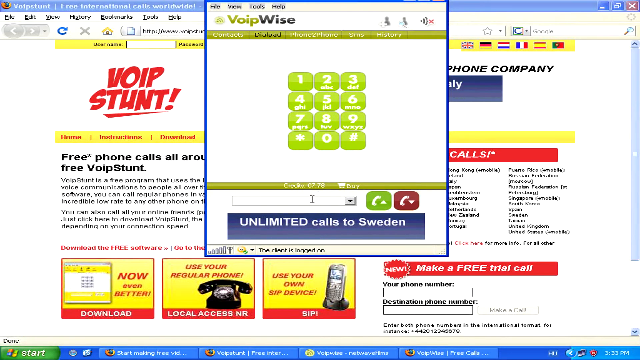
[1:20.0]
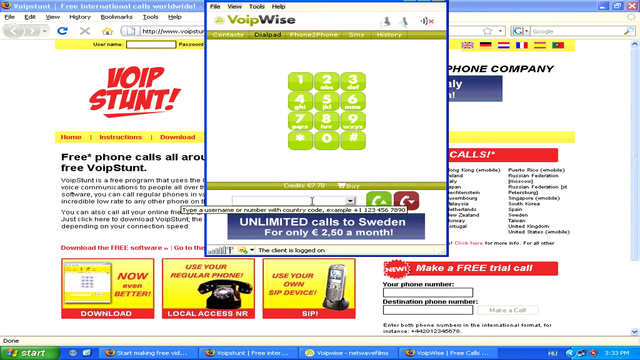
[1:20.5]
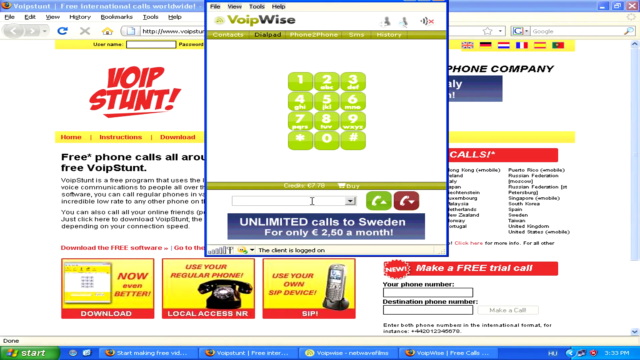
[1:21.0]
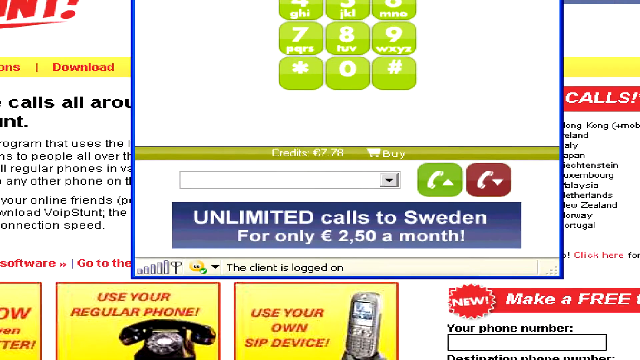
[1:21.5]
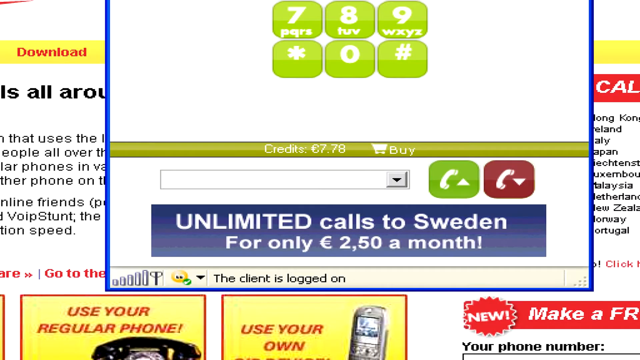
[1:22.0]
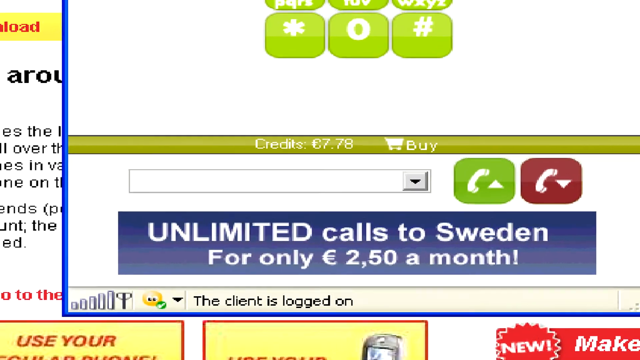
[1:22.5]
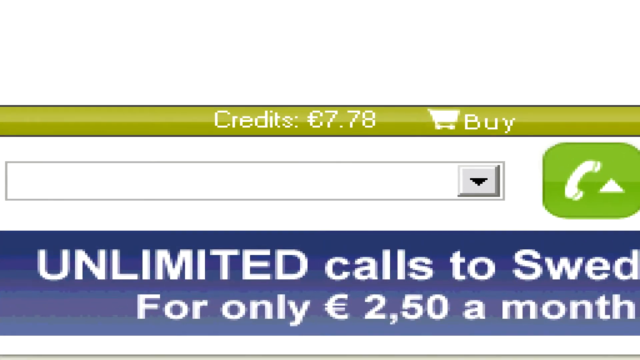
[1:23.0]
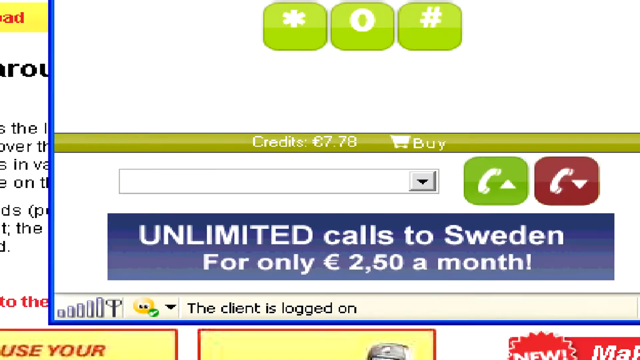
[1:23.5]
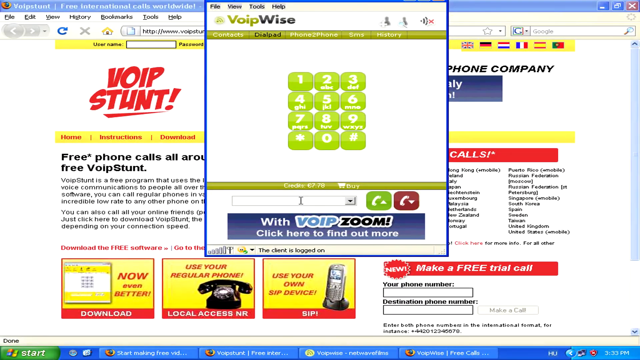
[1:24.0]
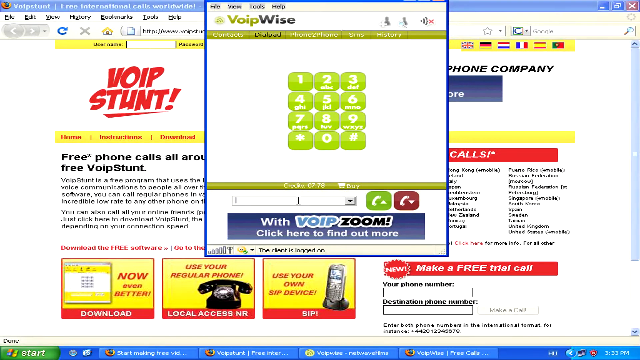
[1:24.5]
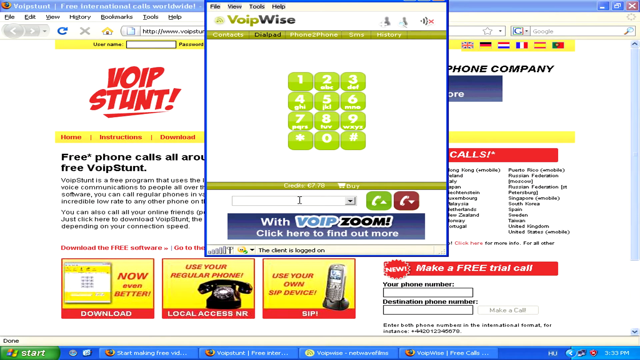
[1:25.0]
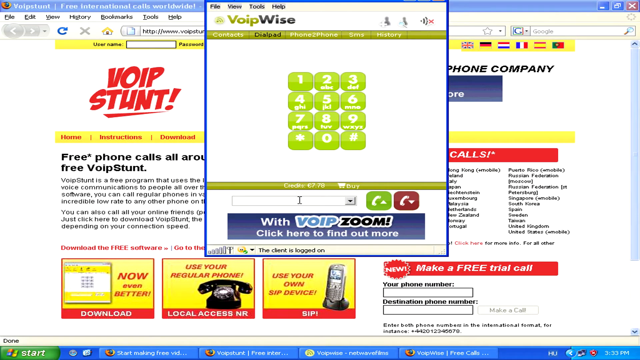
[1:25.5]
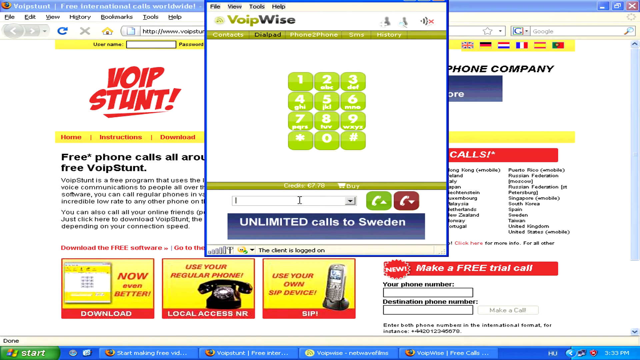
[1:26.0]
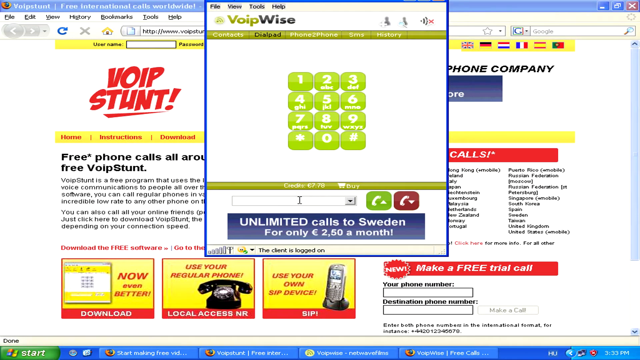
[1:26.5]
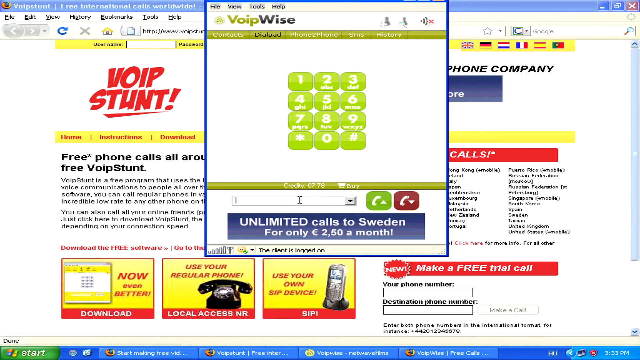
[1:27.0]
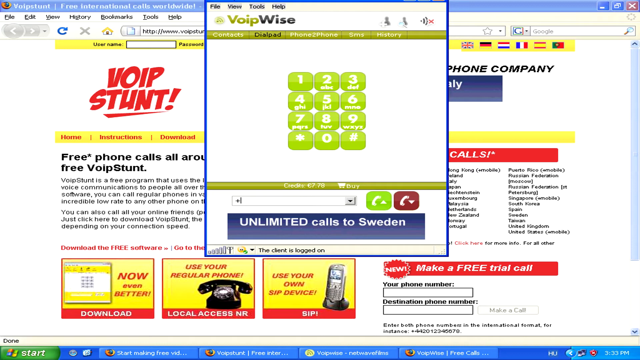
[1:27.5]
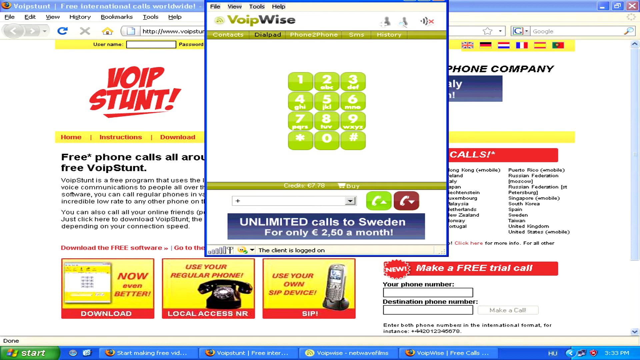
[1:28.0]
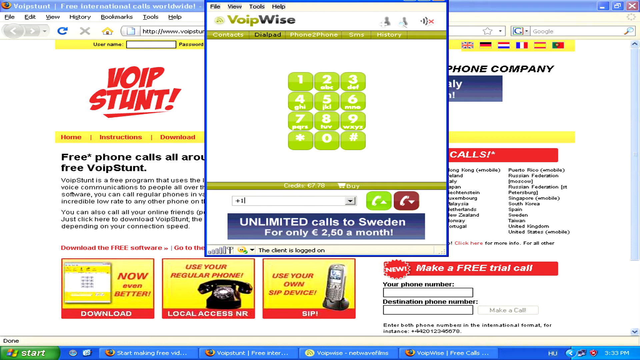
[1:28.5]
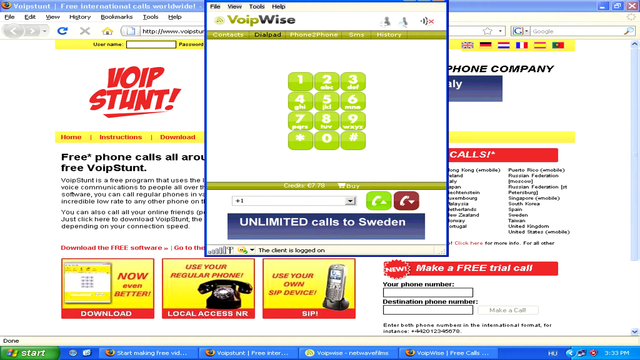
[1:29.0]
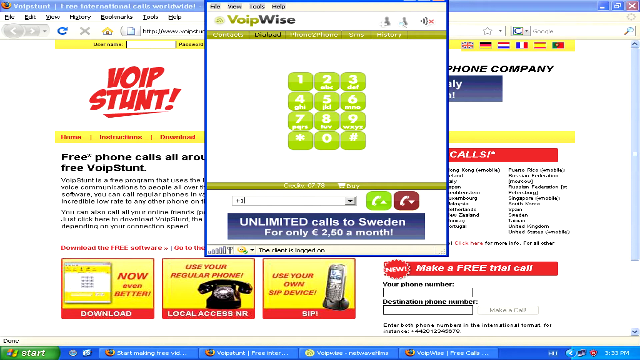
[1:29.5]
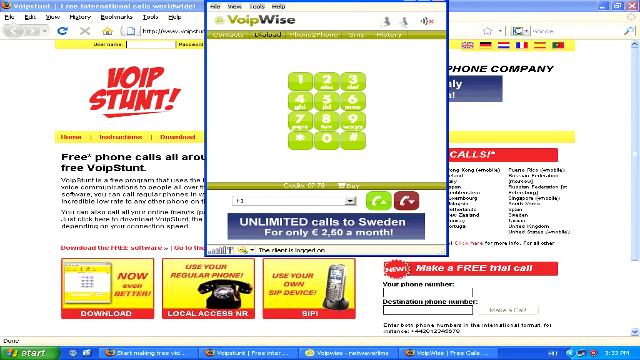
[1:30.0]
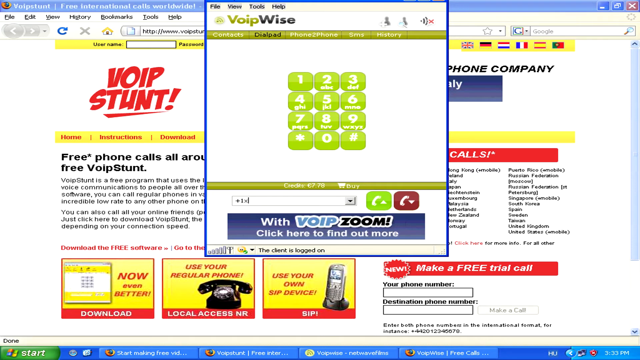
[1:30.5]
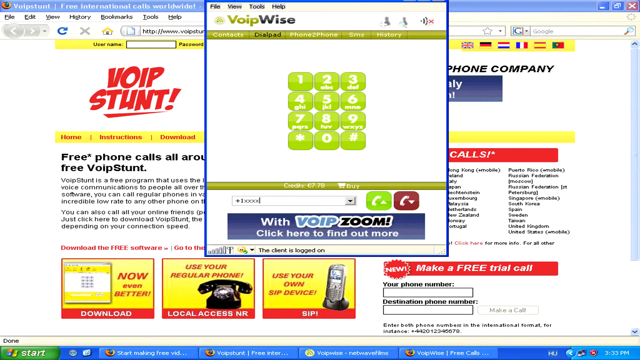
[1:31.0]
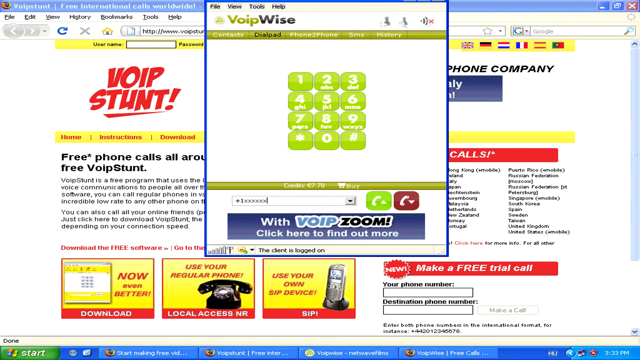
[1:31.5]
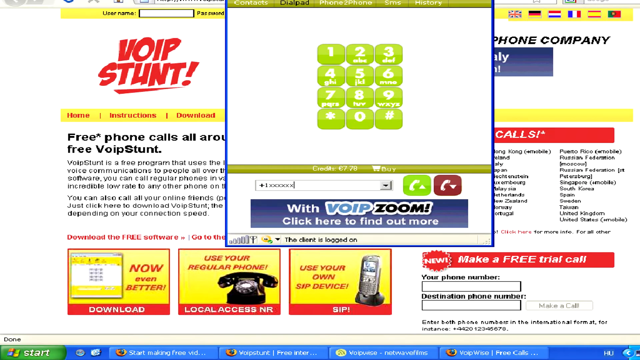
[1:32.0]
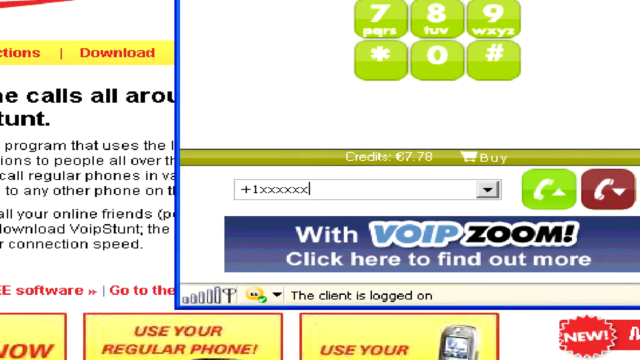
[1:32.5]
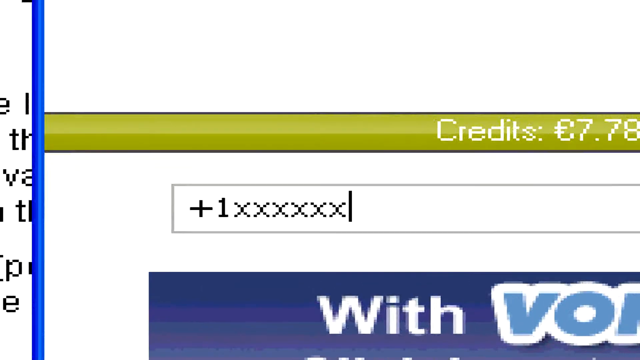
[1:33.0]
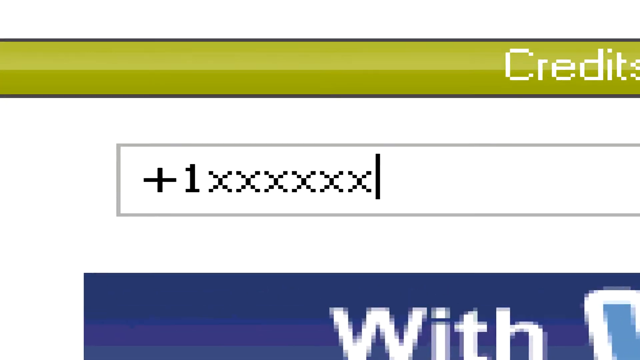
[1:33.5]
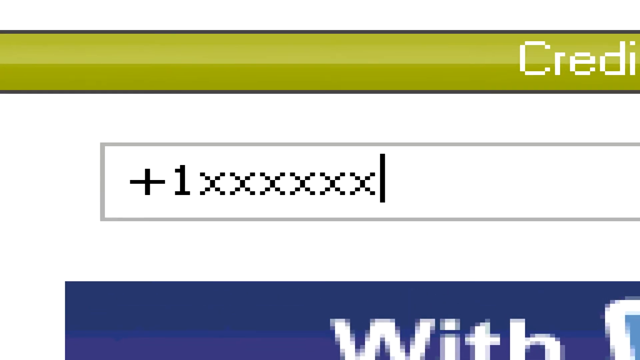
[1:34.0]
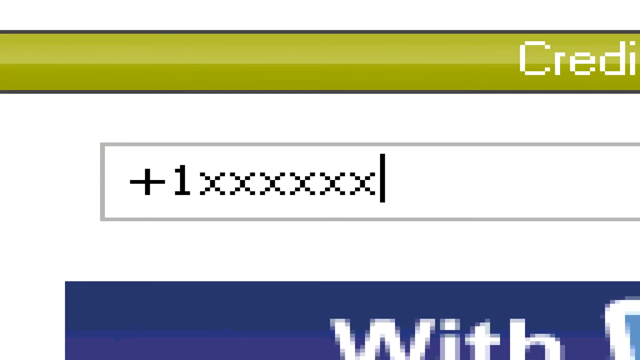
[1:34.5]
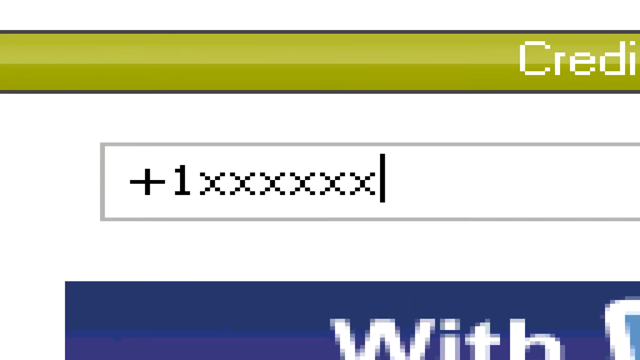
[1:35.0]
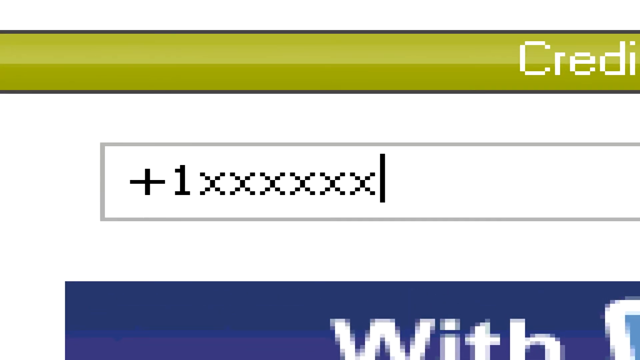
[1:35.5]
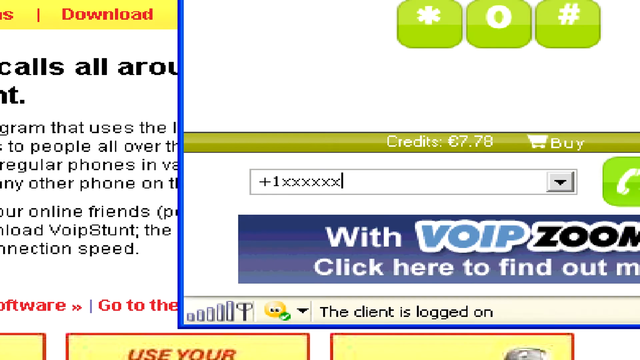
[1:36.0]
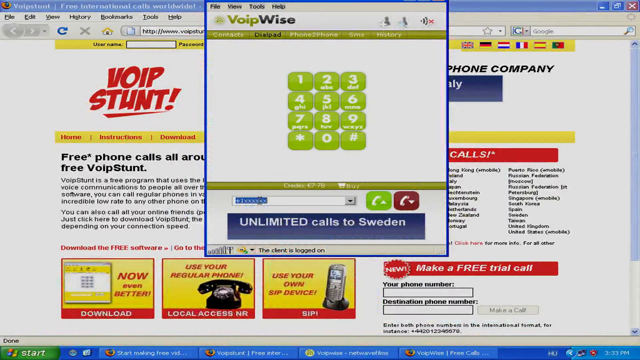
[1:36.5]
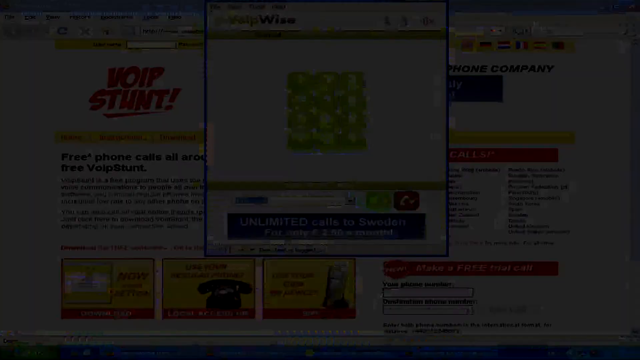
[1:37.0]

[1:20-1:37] The free VoIP website is shown. He apparently has a number now and is entering a number beginning with plus one two. The service lets users buy a number, buy credit, top up and call someone around the world, with all the countries listed.